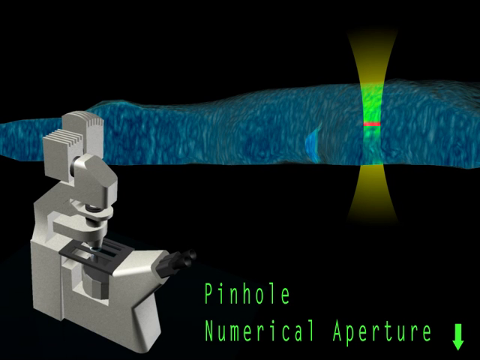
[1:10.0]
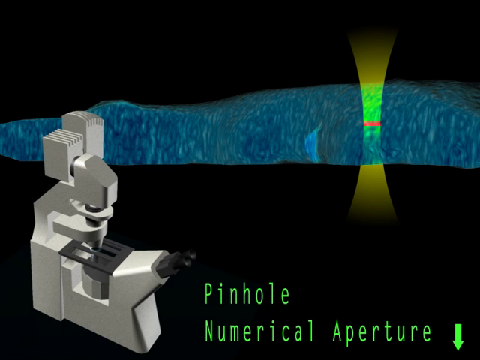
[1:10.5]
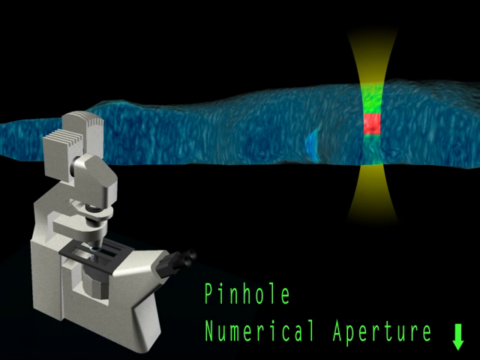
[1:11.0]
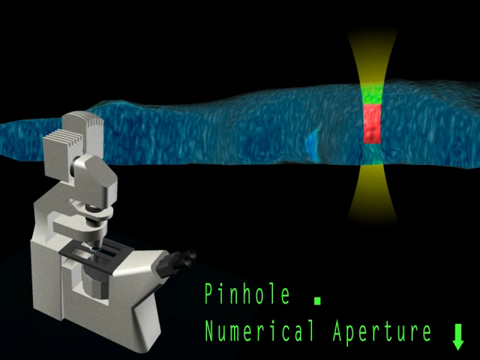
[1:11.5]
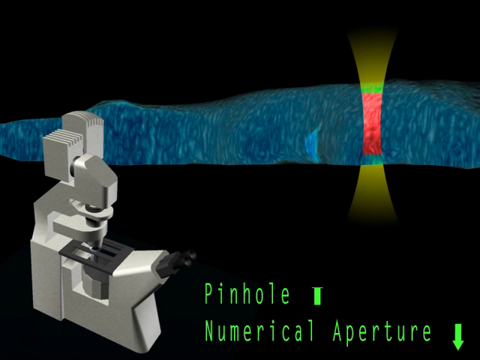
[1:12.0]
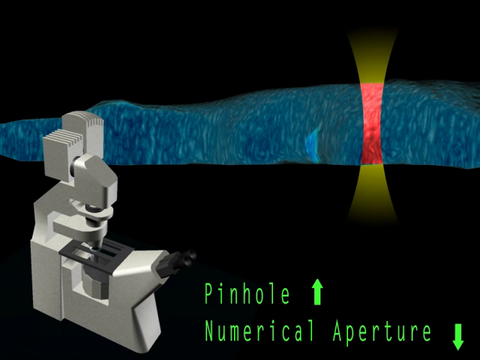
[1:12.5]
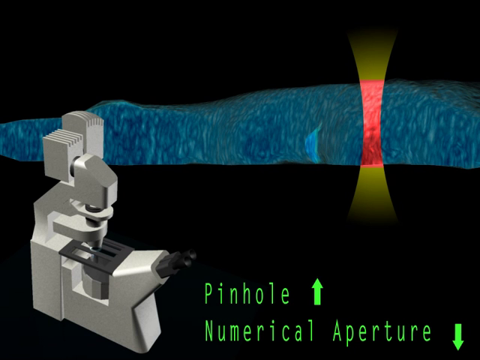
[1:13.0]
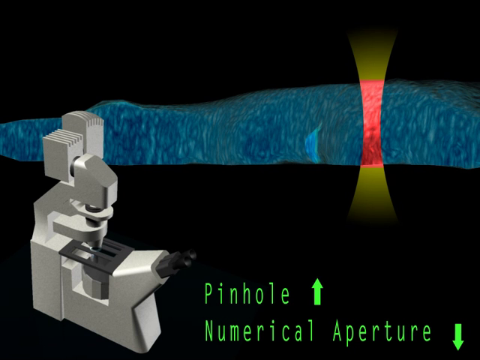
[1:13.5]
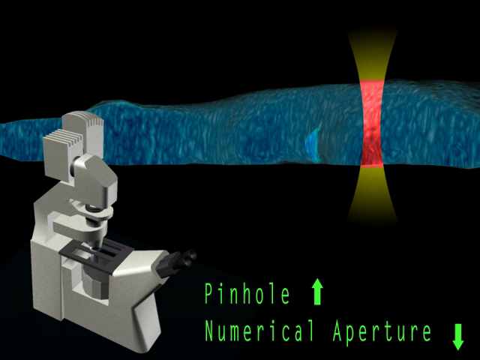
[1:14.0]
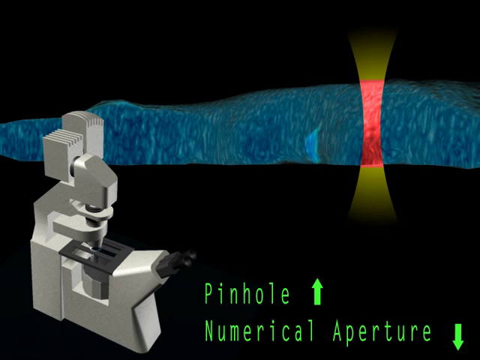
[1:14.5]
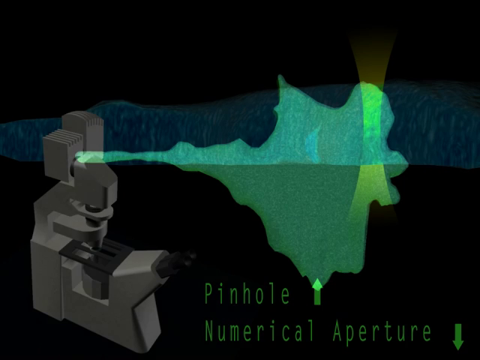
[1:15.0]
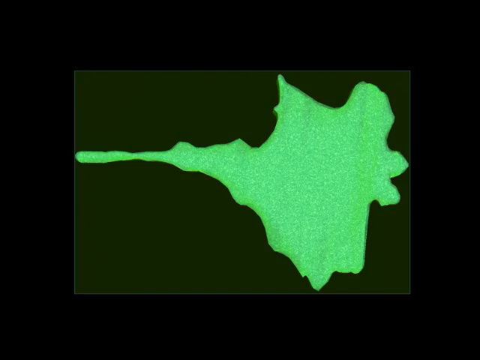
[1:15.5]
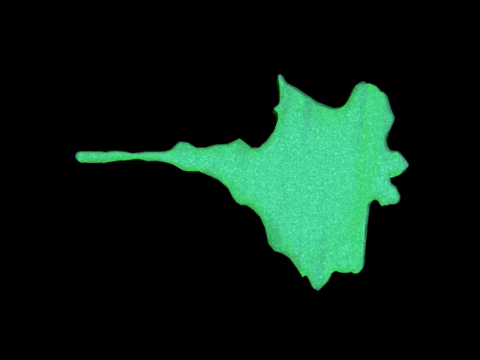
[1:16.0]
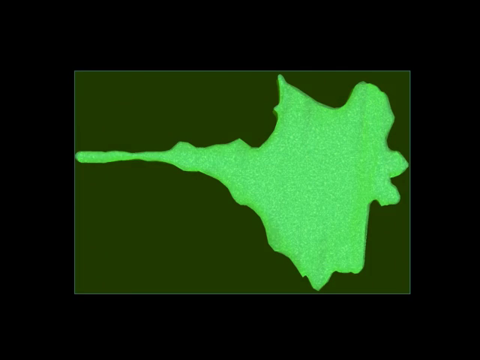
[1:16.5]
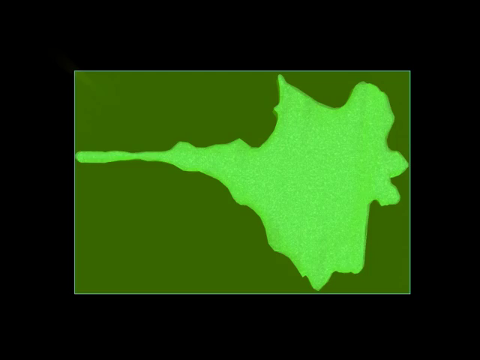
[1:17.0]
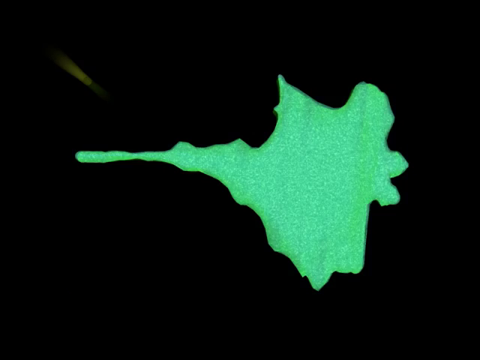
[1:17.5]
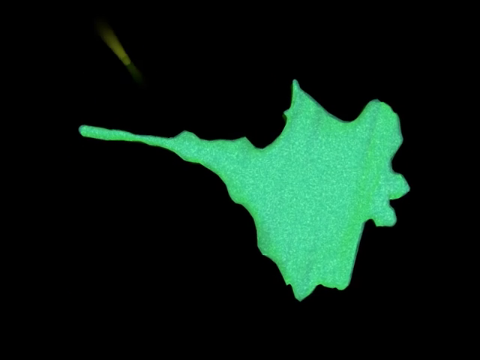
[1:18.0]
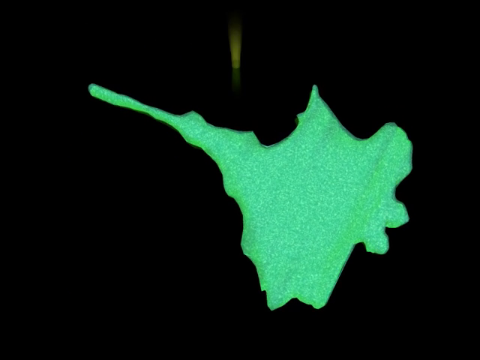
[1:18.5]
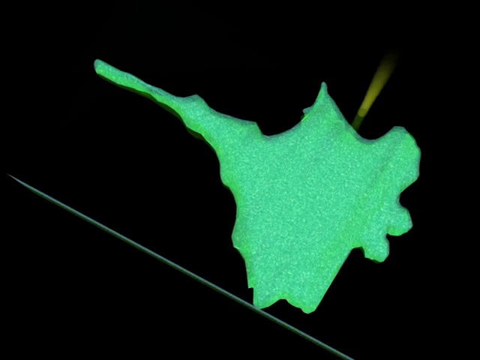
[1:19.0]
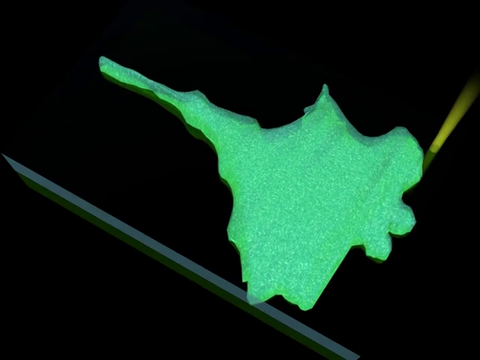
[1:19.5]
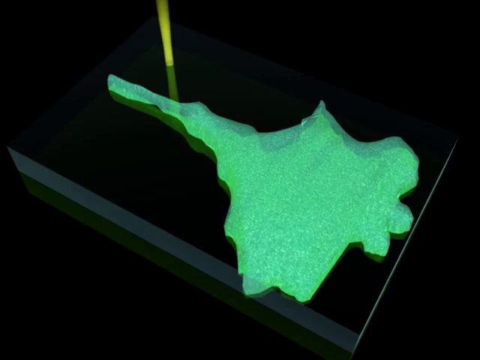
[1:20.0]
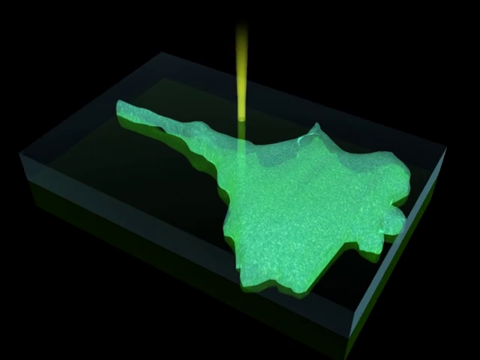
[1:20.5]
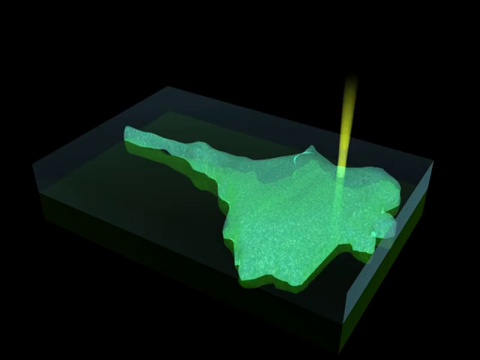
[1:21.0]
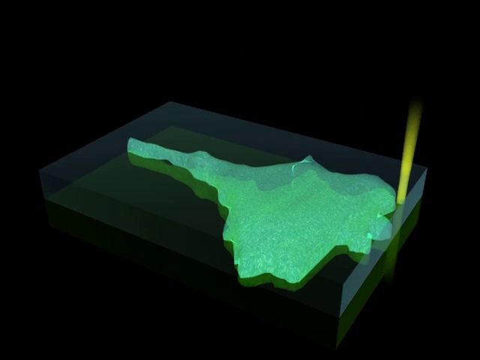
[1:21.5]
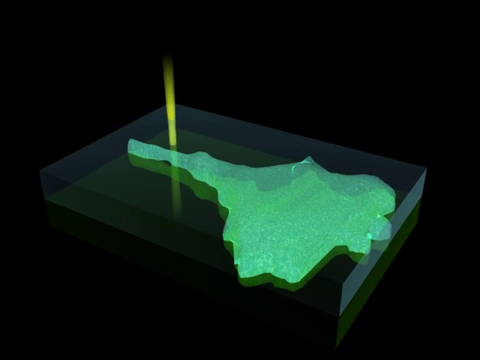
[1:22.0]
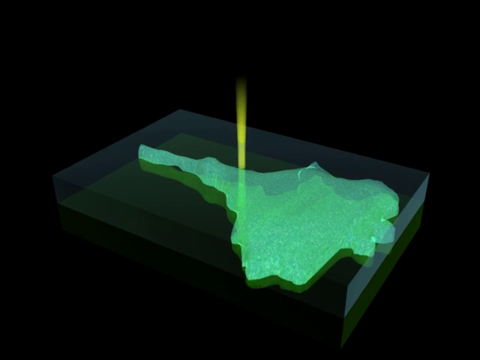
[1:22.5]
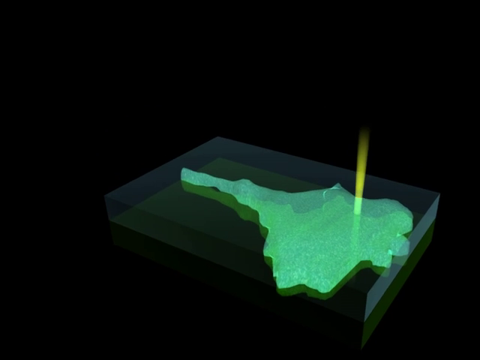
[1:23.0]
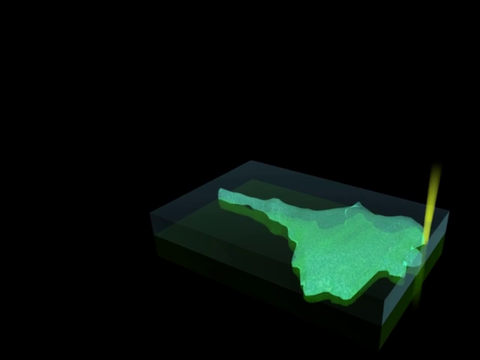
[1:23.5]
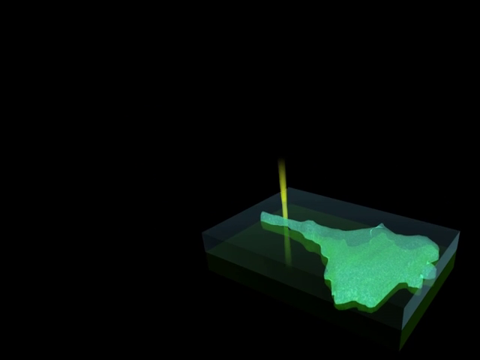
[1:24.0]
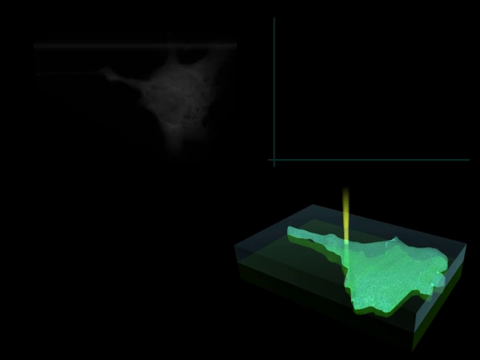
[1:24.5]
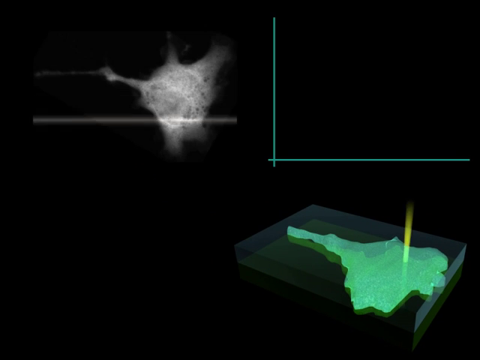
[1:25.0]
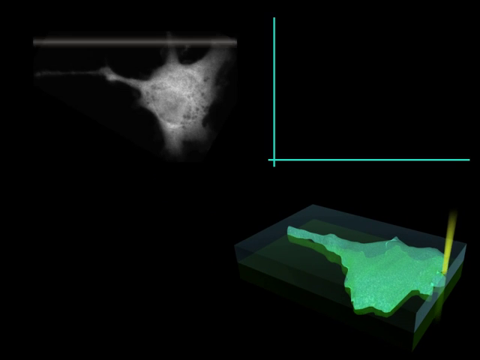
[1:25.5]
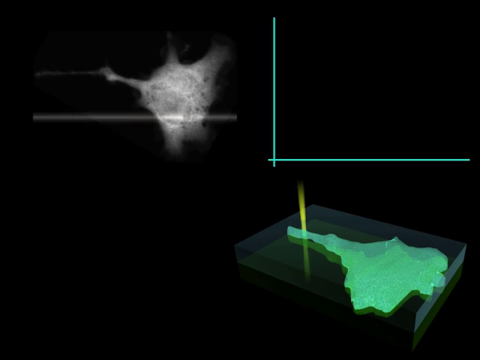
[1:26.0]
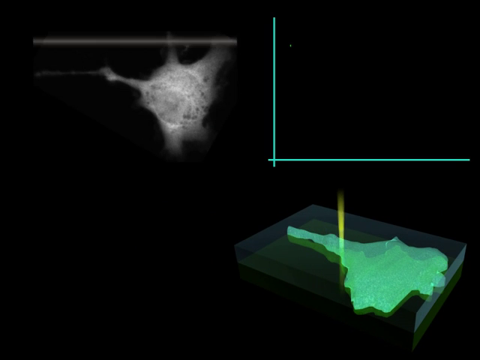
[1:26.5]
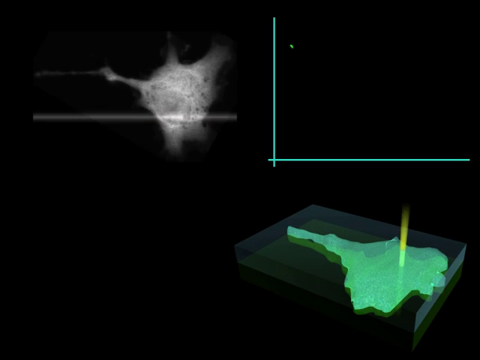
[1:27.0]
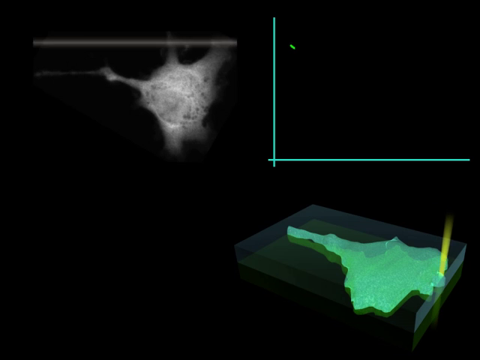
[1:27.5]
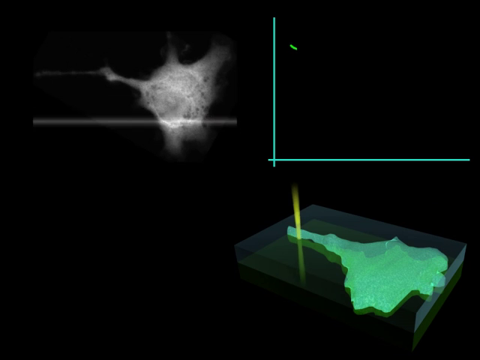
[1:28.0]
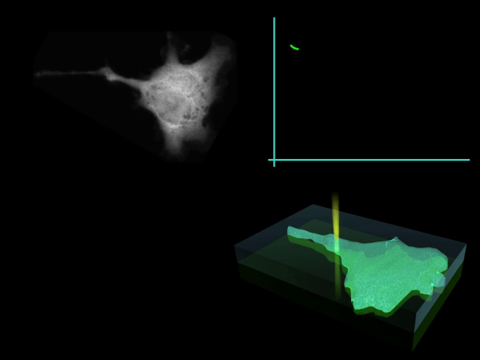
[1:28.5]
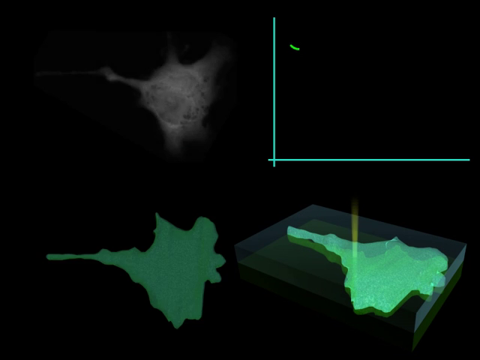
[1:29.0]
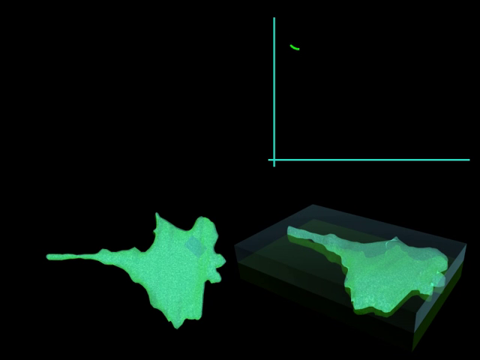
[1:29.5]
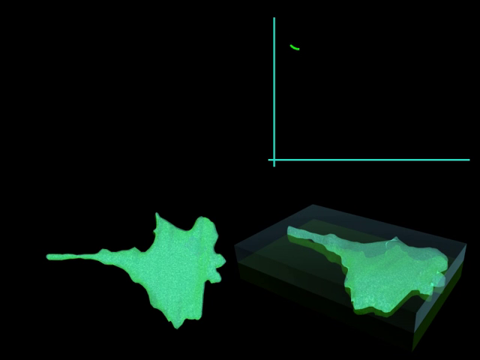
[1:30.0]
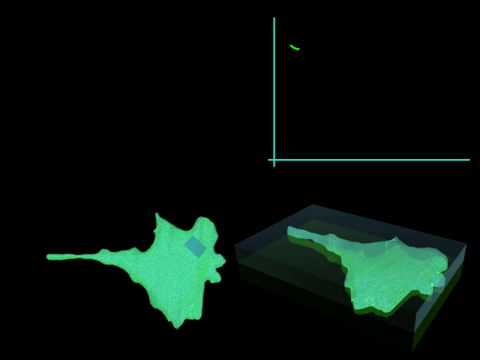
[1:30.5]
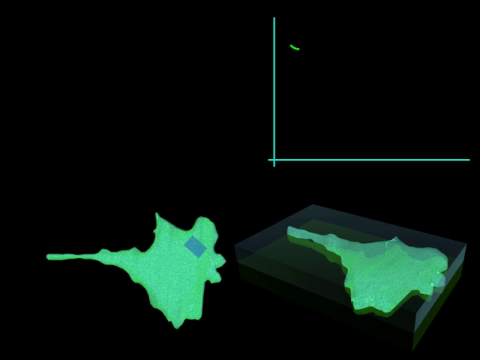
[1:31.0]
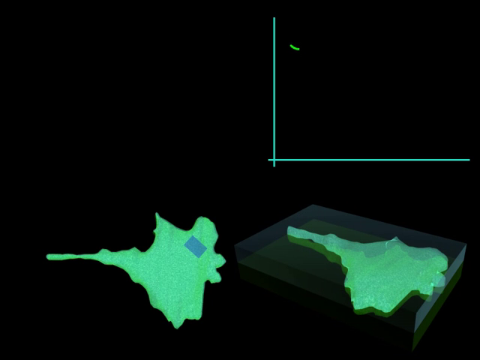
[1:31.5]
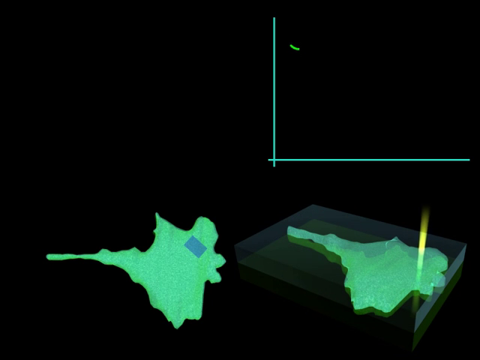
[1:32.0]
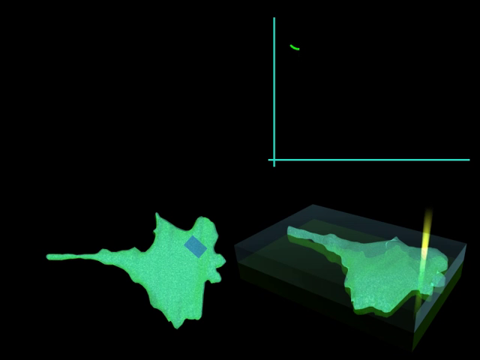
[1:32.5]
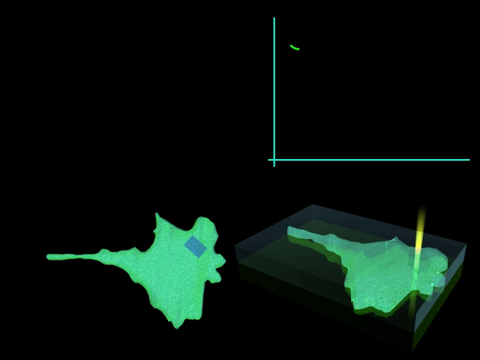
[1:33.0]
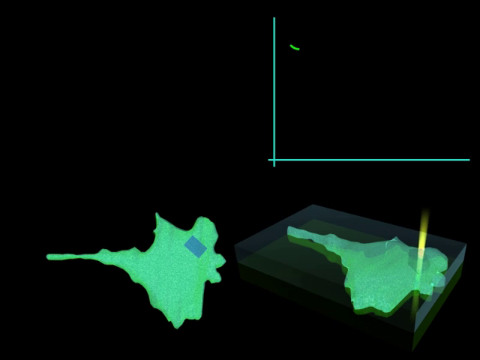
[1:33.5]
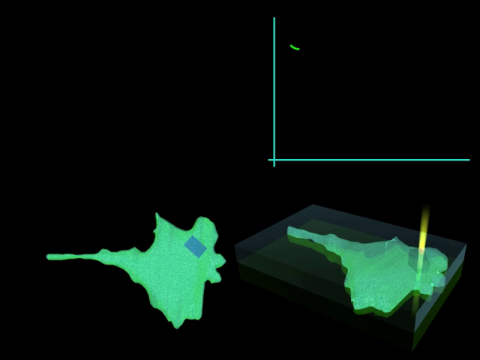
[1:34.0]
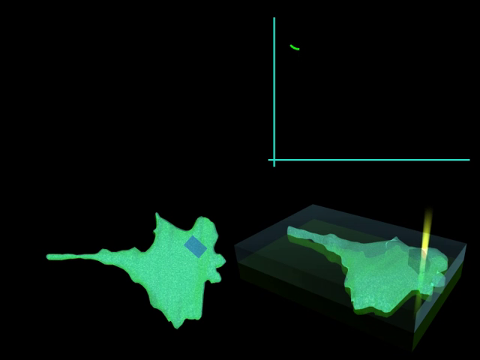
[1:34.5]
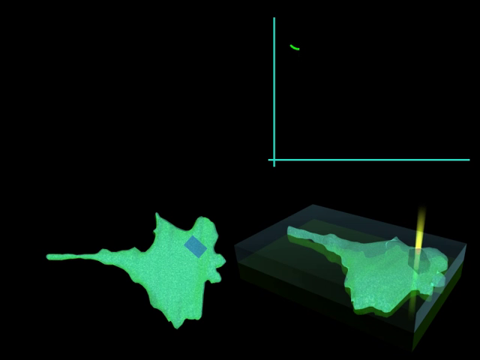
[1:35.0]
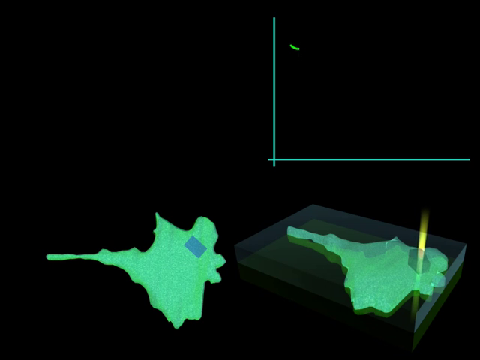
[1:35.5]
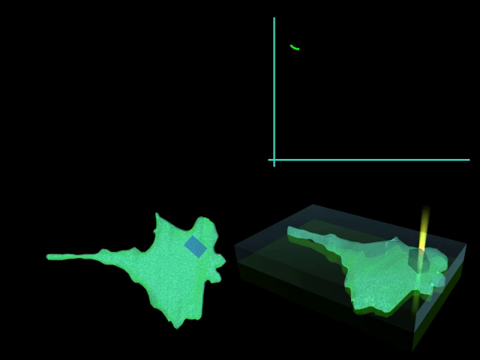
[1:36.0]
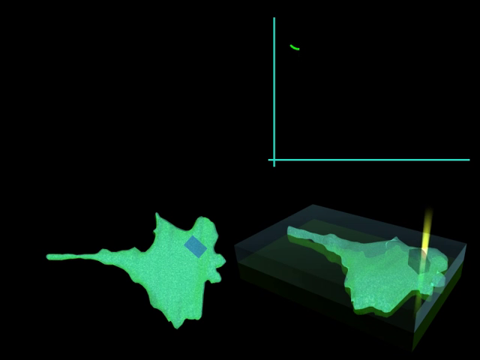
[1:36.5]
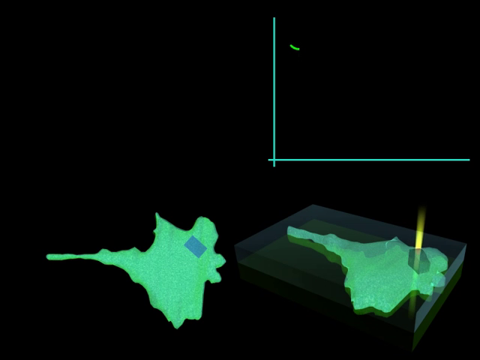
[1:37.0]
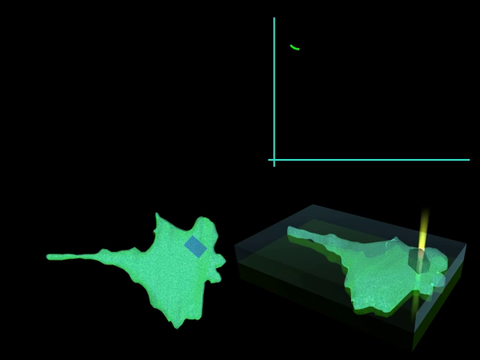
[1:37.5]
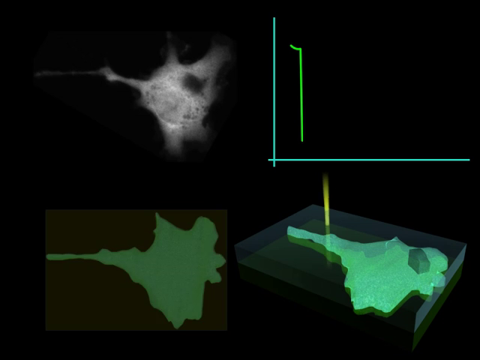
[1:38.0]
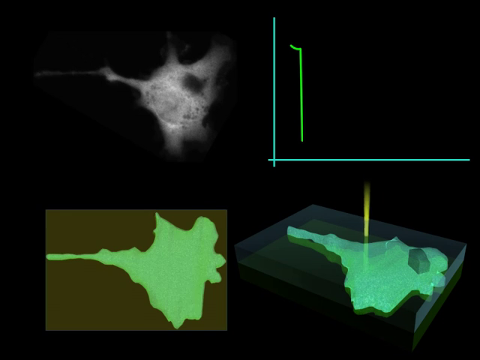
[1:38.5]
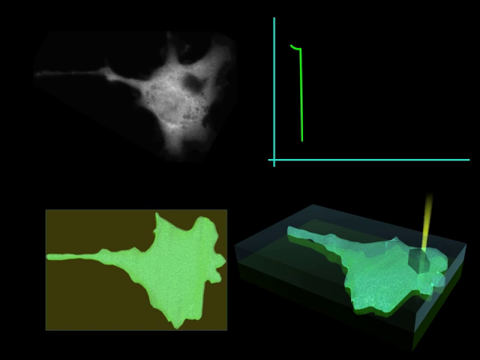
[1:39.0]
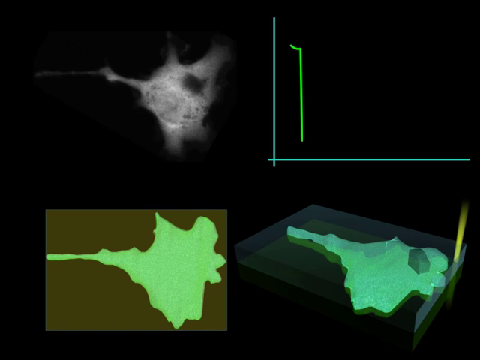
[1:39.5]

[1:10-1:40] The words "pinhole numerical aperture" appear with a picture of a microscope to the left of them. A small fragment of the feature is highlighted. The next scene begins with a green structure with something like a white cellular structure to its left, and the scans in the microscope are highlighted. A slice of the structure is highlighted: the feature is a blue-like structure, marked with what looks like a yellow highlighter to show the fraction being examined.